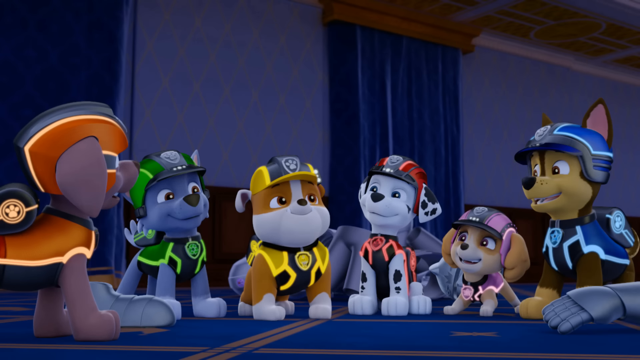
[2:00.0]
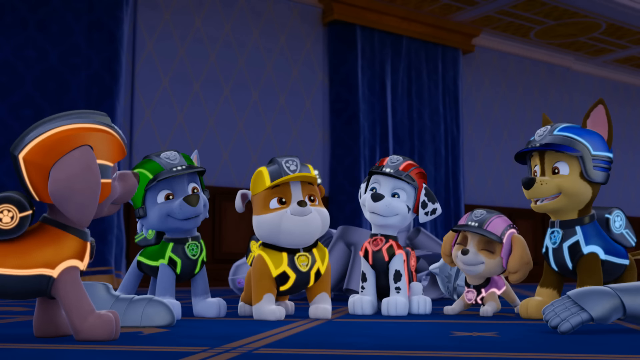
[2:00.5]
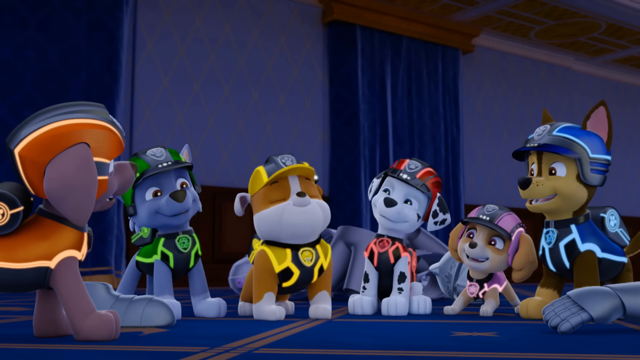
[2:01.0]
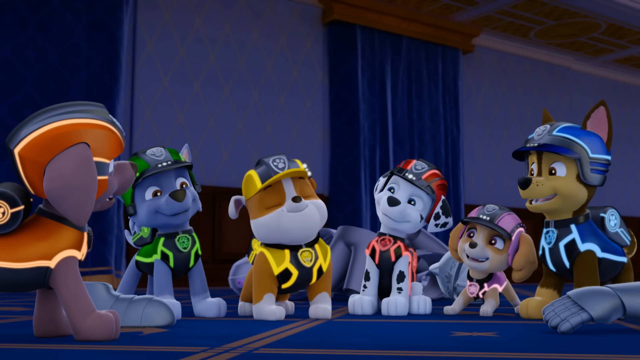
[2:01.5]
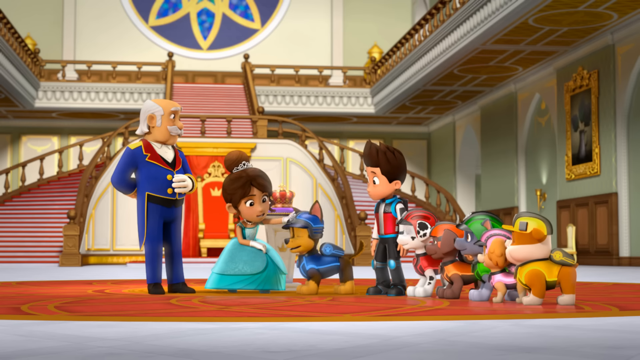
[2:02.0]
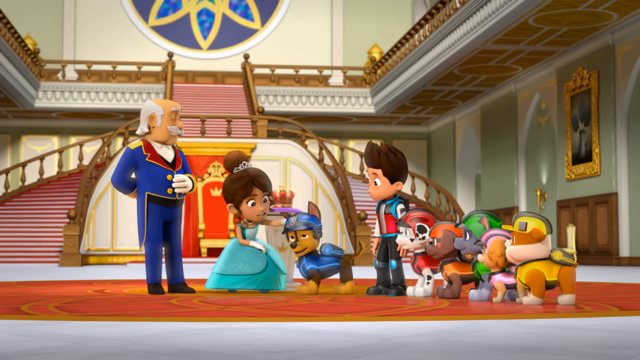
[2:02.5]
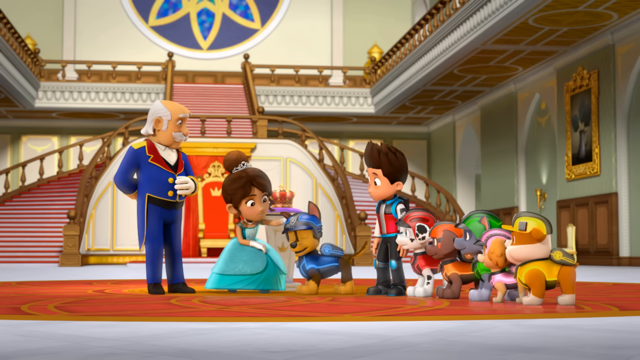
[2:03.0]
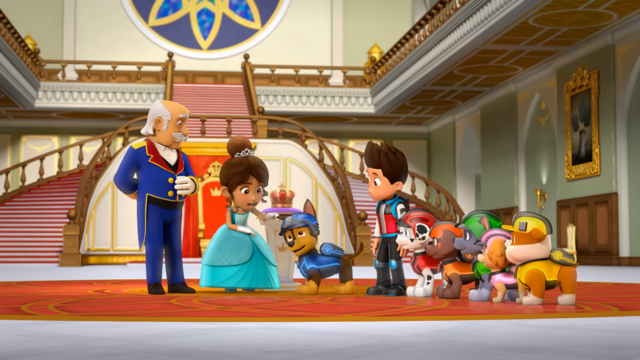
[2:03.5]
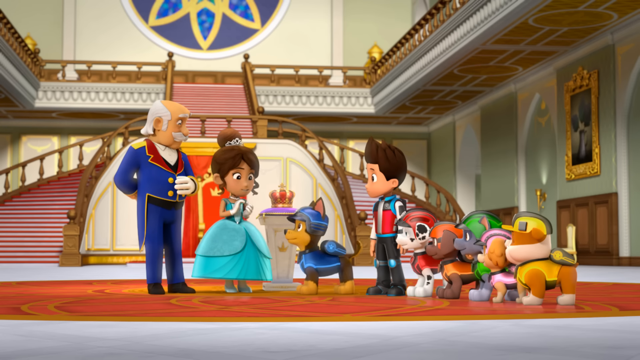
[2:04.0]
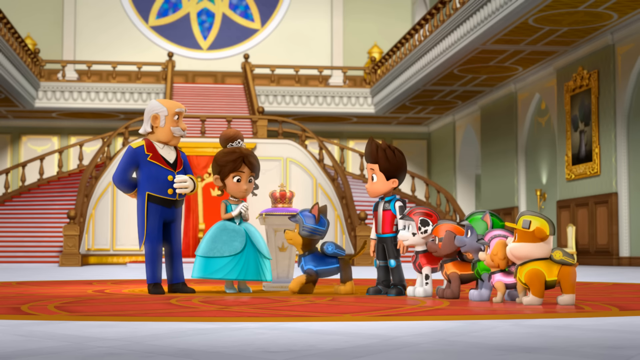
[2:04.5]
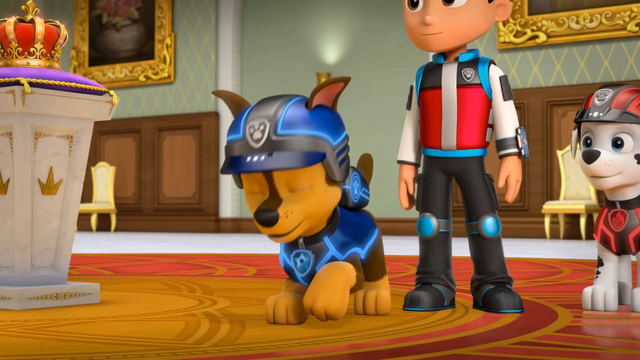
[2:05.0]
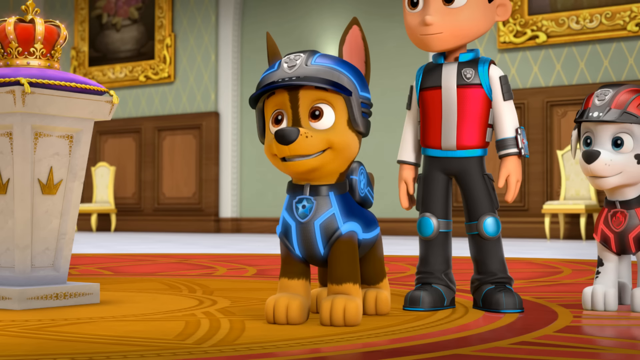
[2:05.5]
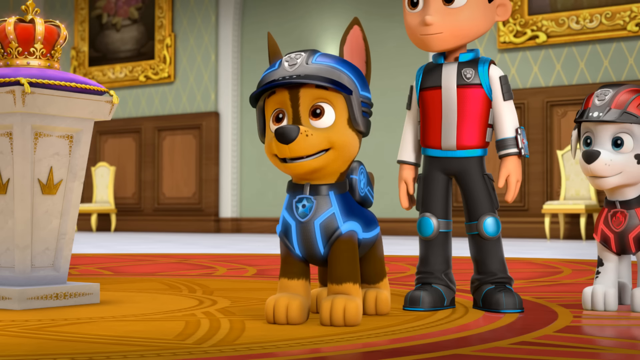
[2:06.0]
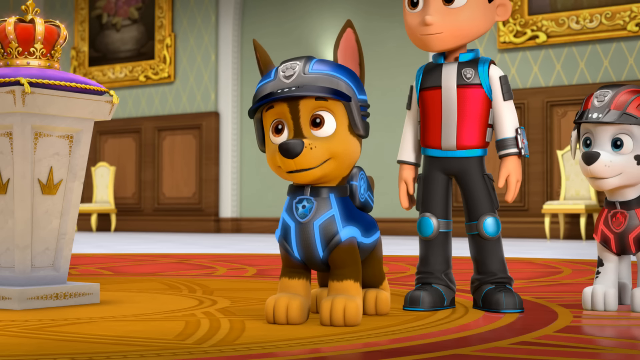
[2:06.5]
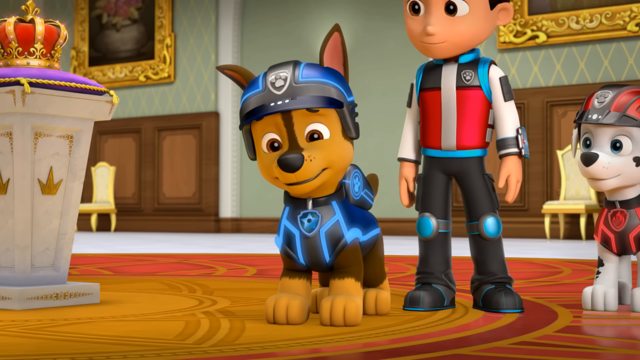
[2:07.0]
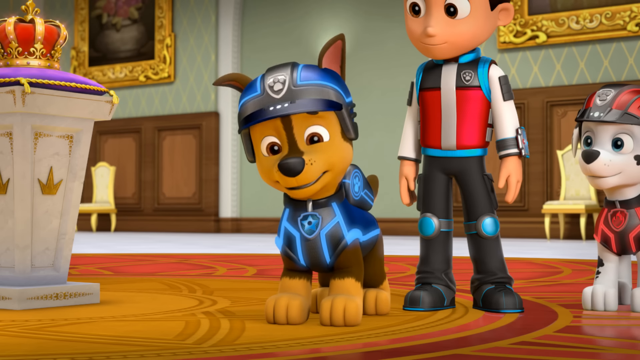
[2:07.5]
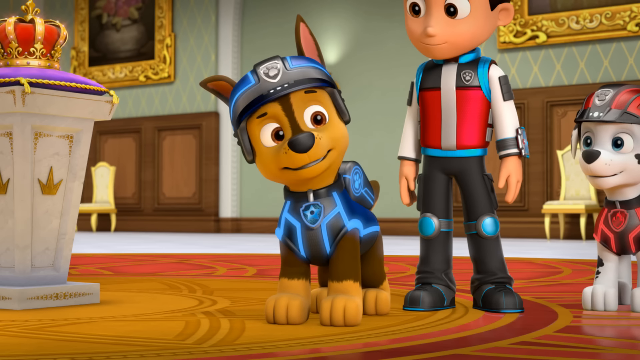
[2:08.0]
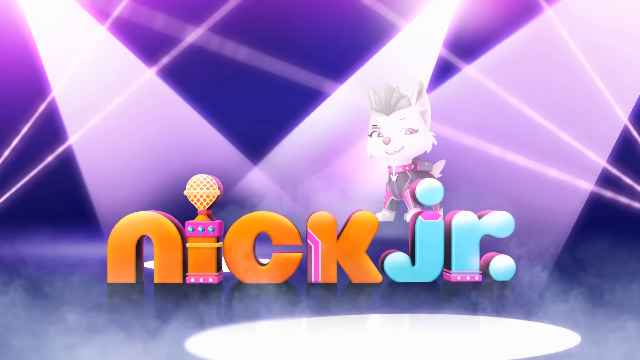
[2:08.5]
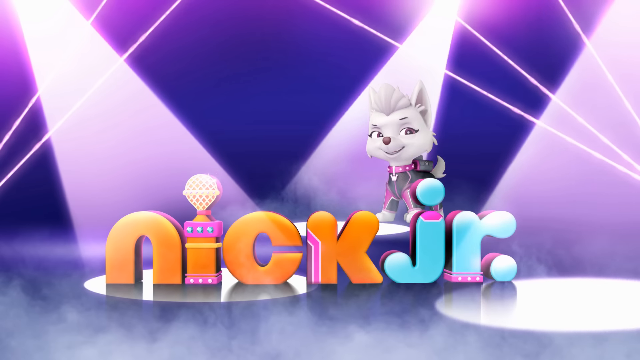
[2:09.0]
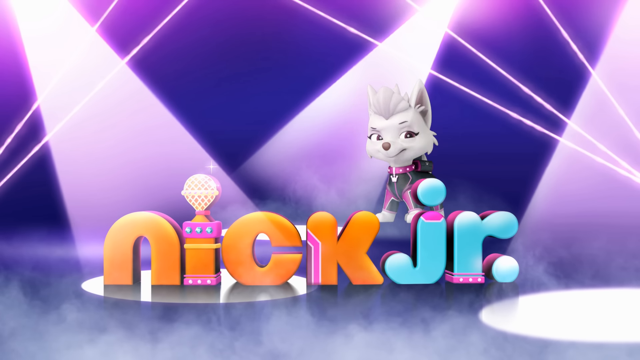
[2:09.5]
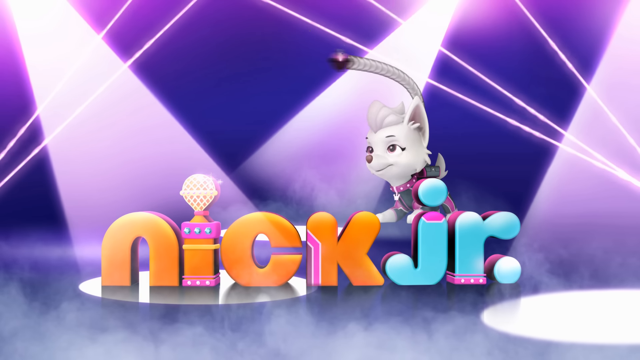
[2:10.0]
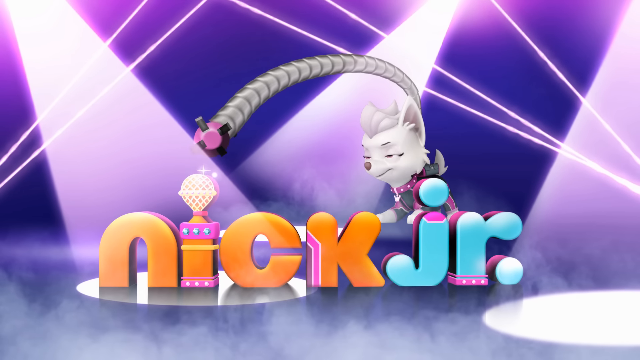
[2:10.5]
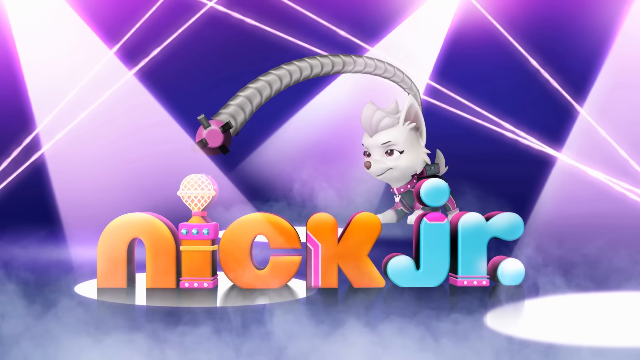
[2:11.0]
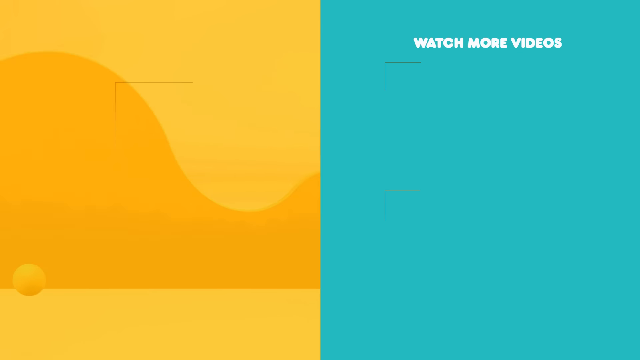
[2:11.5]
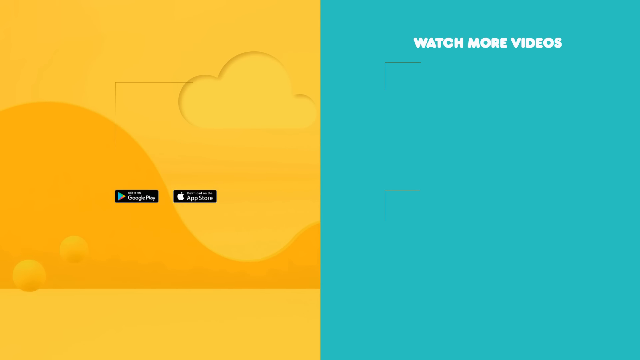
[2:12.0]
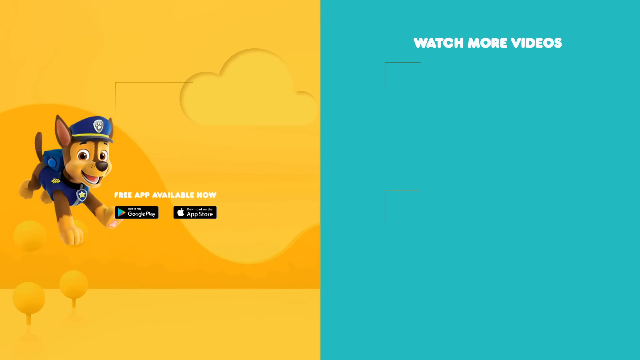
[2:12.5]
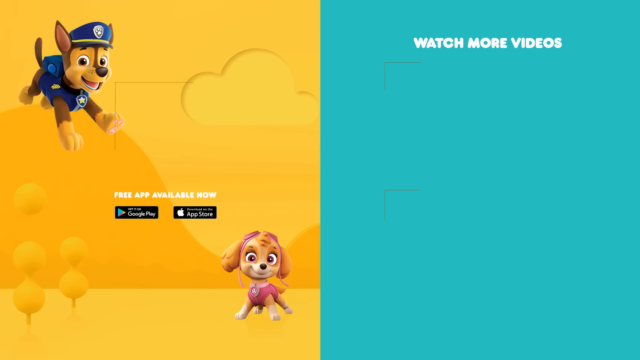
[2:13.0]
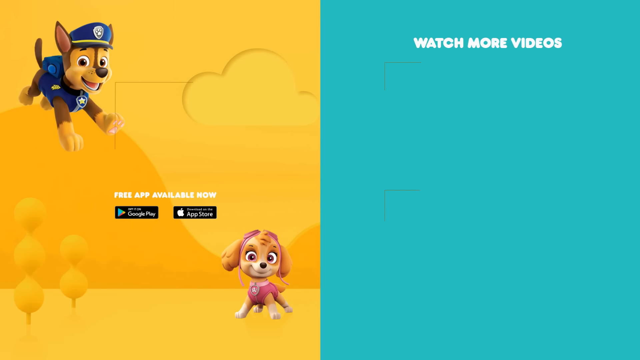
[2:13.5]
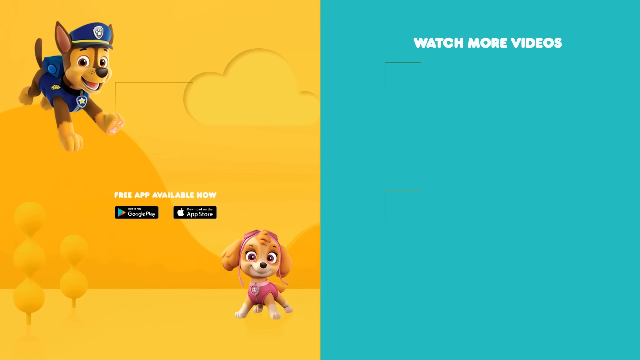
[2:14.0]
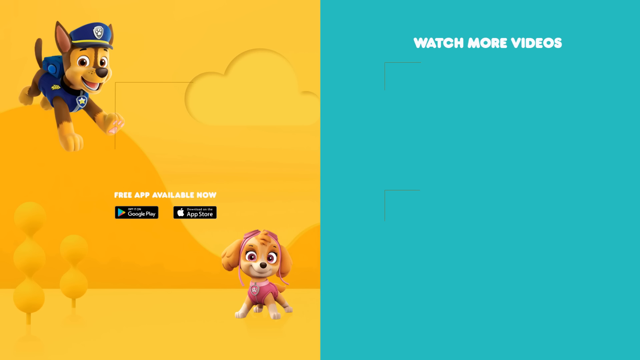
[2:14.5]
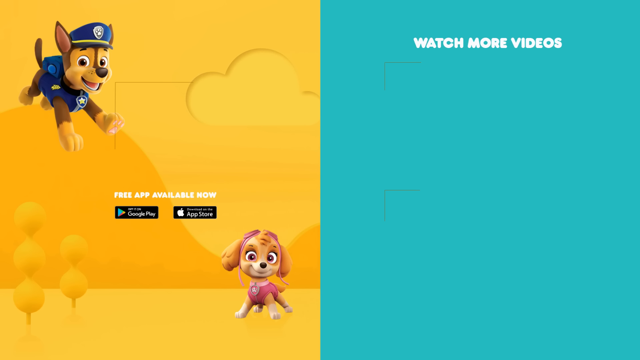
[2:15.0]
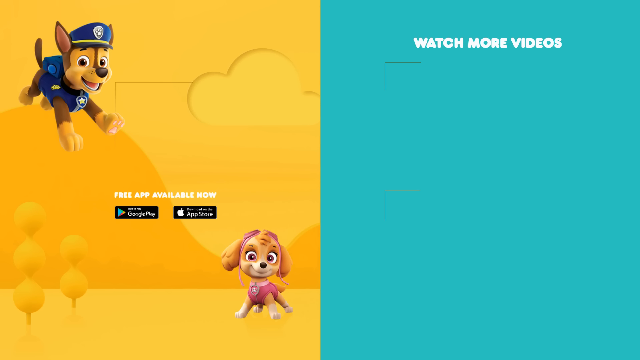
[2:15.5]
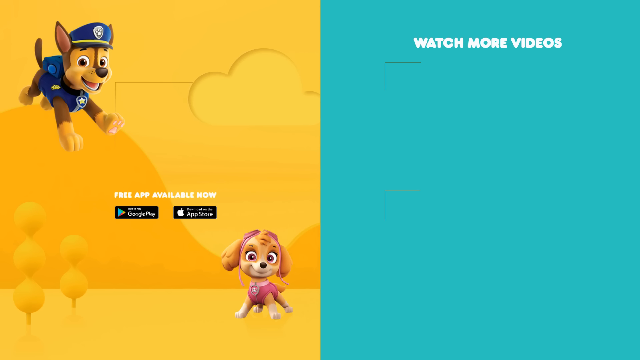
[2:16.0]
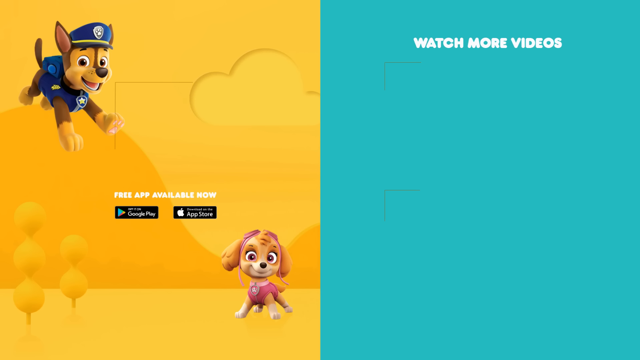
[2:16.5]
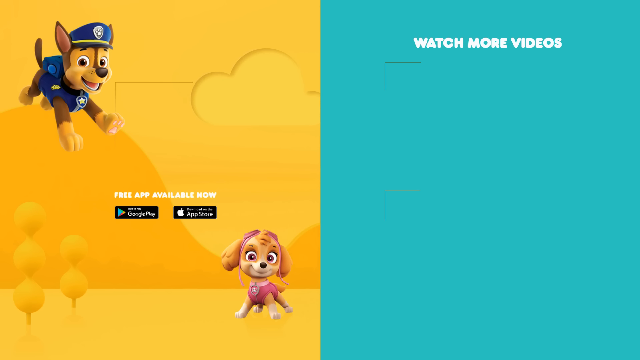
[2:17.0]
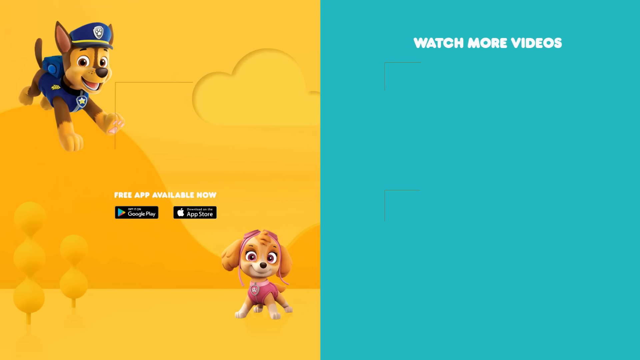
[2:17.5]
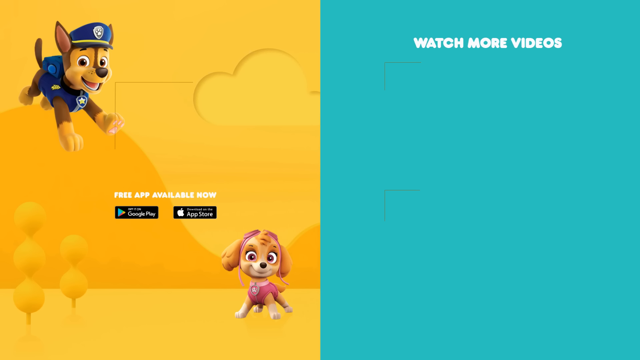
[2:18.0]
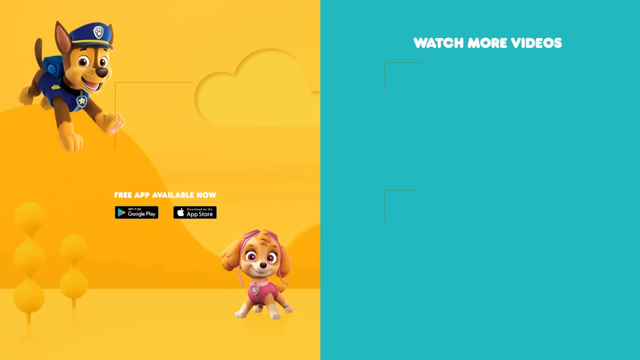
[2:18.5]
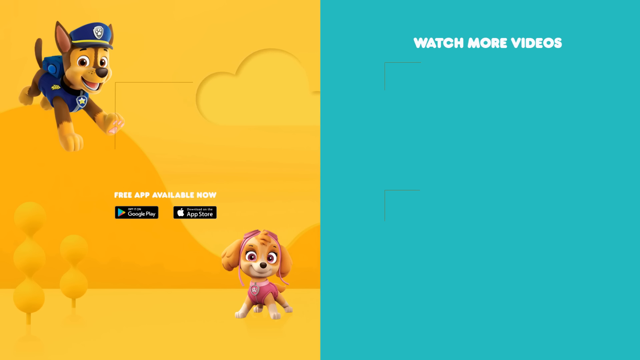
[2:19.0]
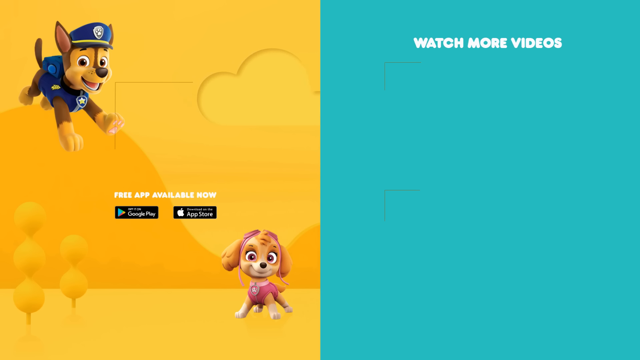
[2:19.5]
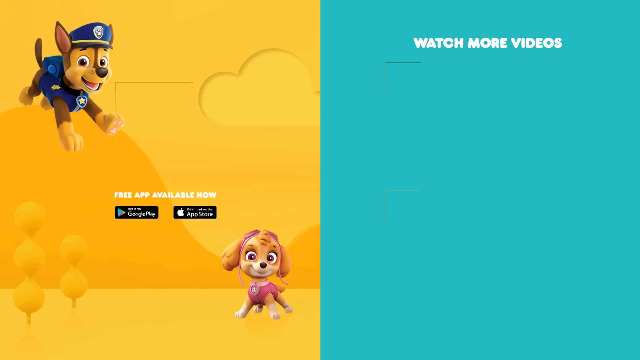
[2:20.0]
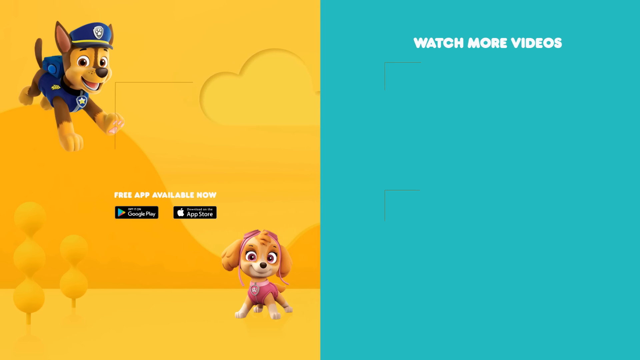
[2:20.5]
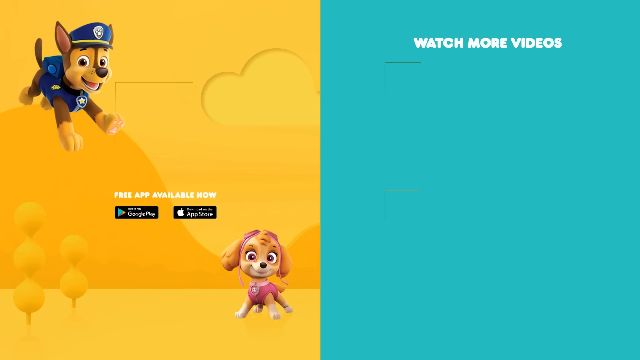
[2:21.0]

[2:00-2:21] Six dogs stand in a line: one in an orange suit, one in a green suit, one in a yellow suit with a builder's hard hat, one in a red suit with spots in a Dalmatian style, one in a pink suit and one in a blue suit. They all wear helmets and what look like illuminated suits. The scene cuts back to the grand hallway of the castle, with two staircases coming up from either side and a central one. A princess wearing white gloves, with her hair up in a bun, bobs down and taps the blue dog on the head. To her right-hand side is a formal-looking gentleman with a bald head, white hair and a large white moustache, wearing a blue tail suit jacket with gold buttons. The princess stands up, and the dog's ears point up at the sky and then droop down. A Nick Jr logo appears: "Nick" is in orange with a microphone on top of the I, and the junior part is just the lowercase letters "jr." with a full stop. Searchlights come from the side, and the white dog is there. A big mechanical arm comes out of her back to take the microphone, which might be a jewel forming part of the I.